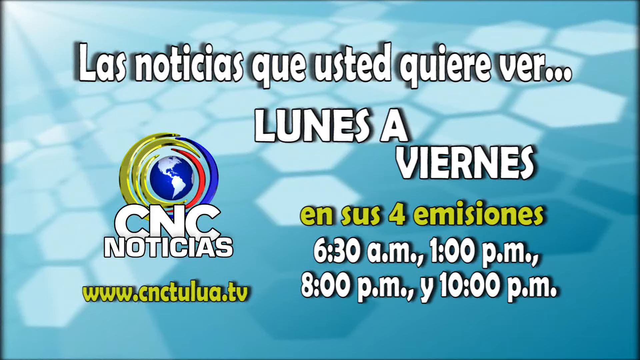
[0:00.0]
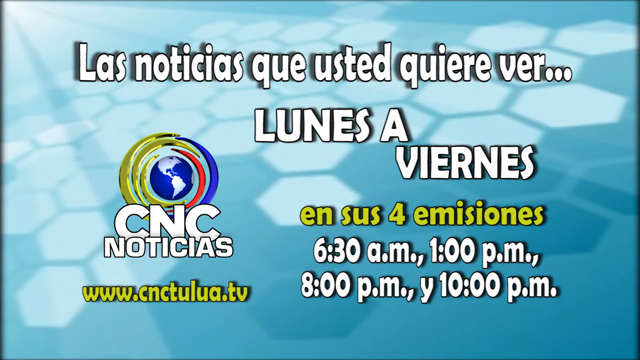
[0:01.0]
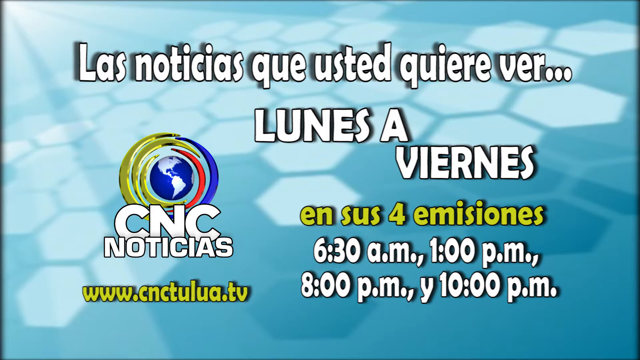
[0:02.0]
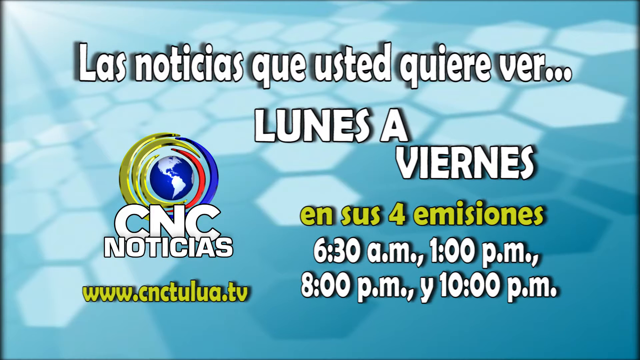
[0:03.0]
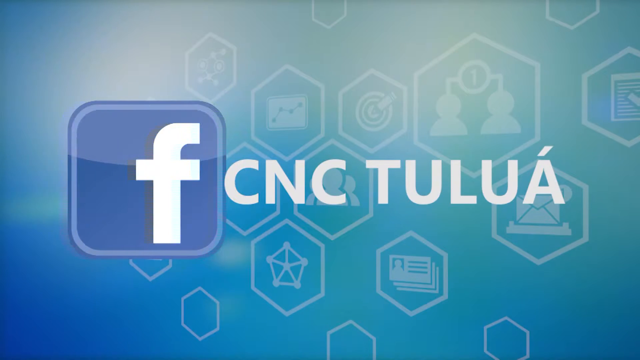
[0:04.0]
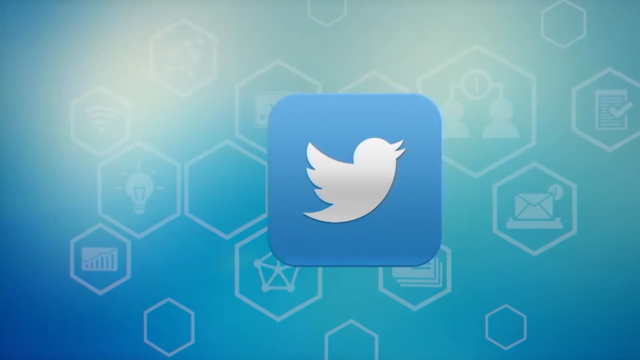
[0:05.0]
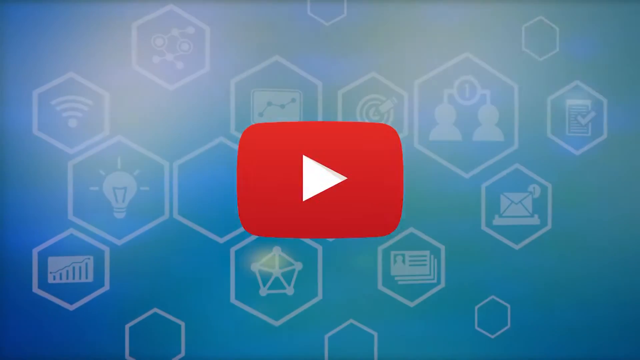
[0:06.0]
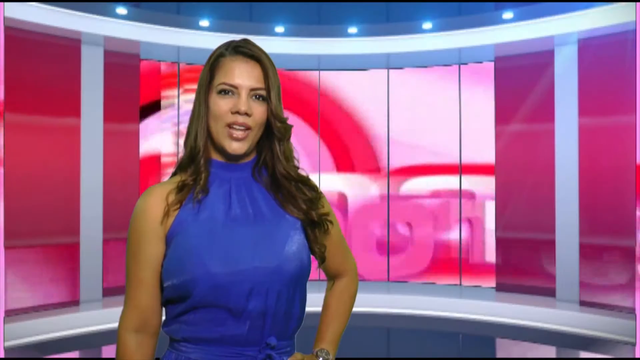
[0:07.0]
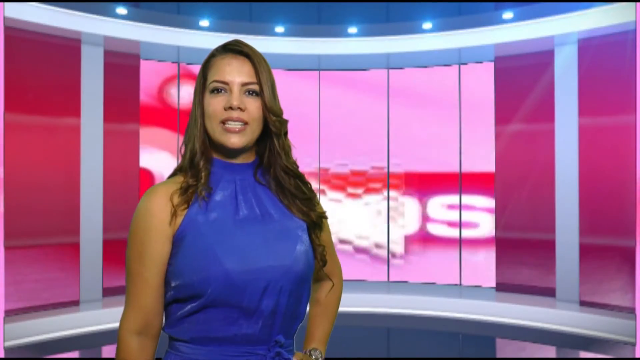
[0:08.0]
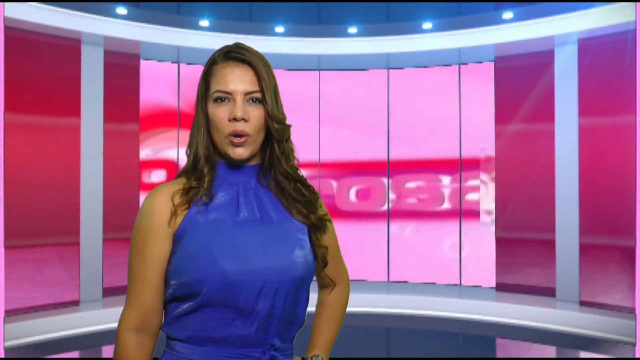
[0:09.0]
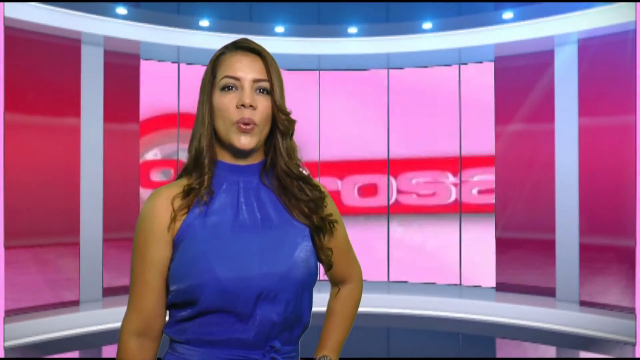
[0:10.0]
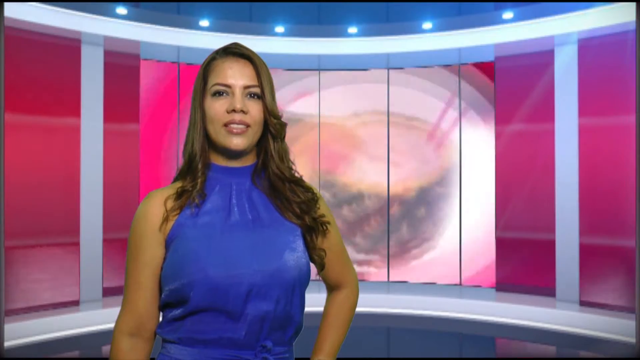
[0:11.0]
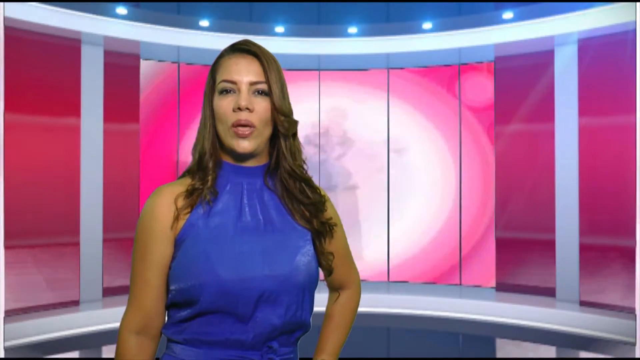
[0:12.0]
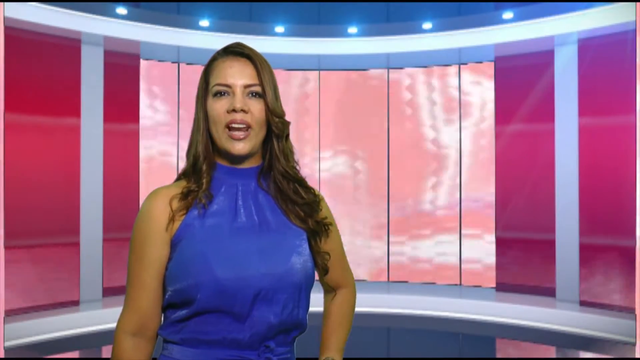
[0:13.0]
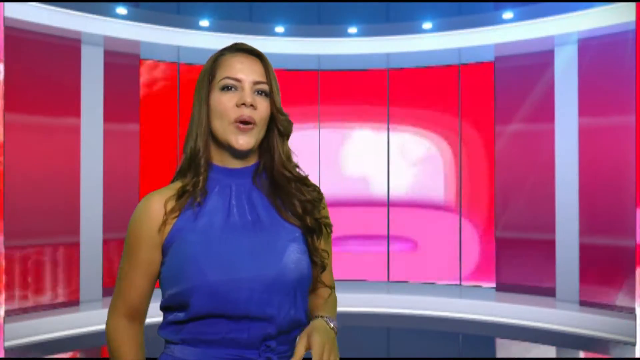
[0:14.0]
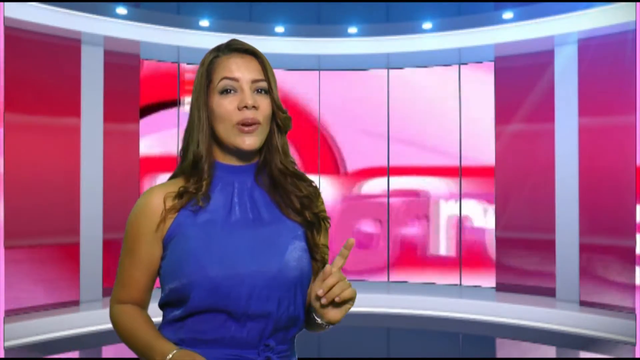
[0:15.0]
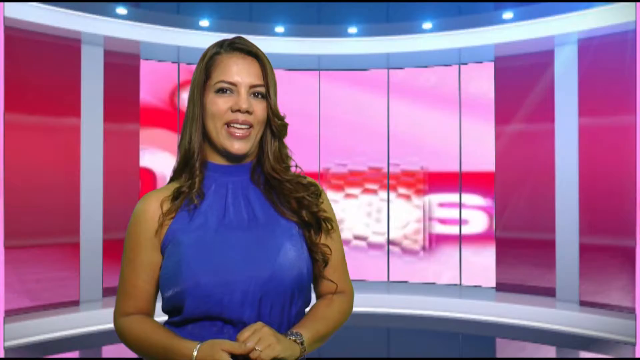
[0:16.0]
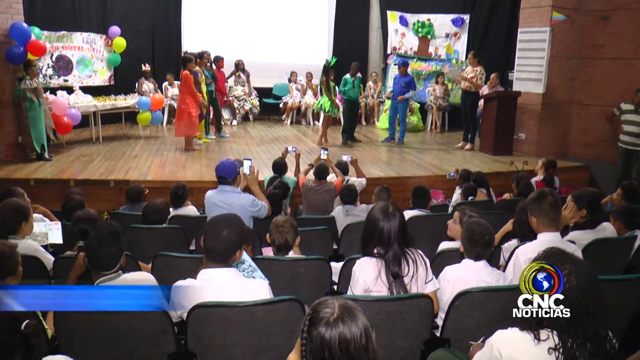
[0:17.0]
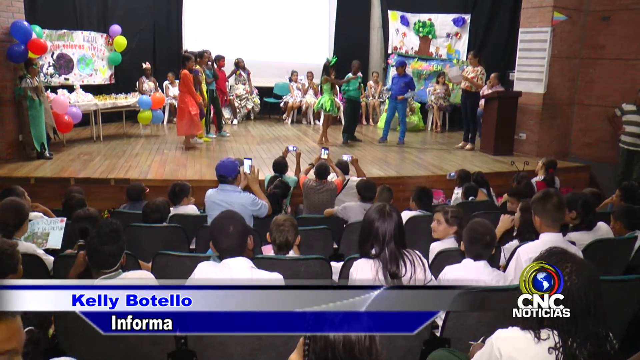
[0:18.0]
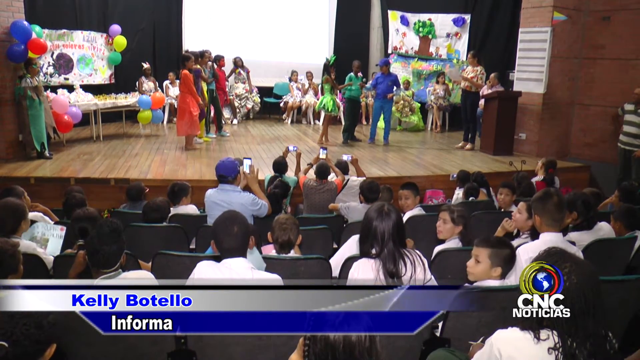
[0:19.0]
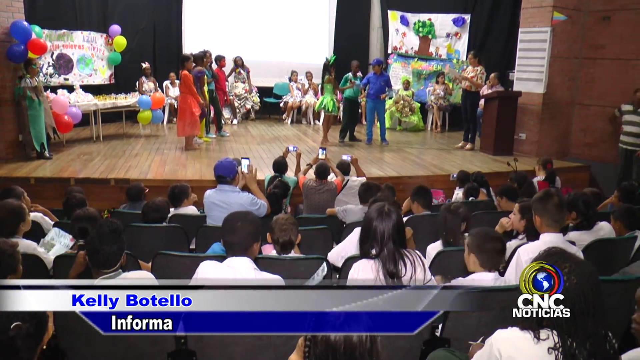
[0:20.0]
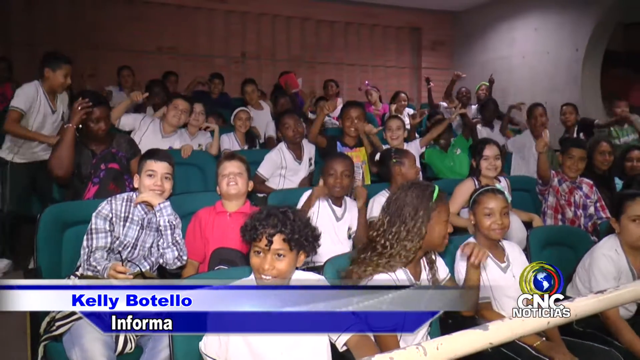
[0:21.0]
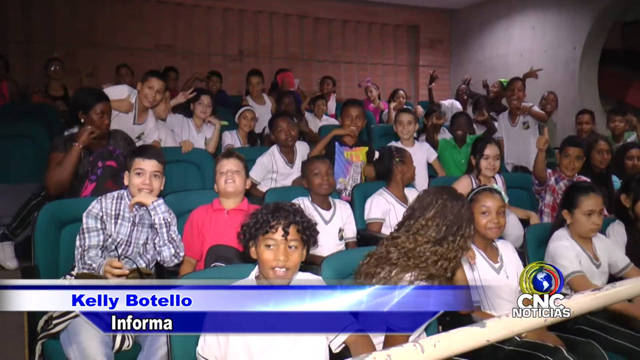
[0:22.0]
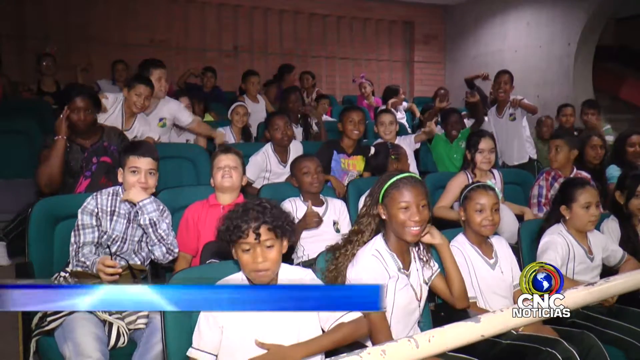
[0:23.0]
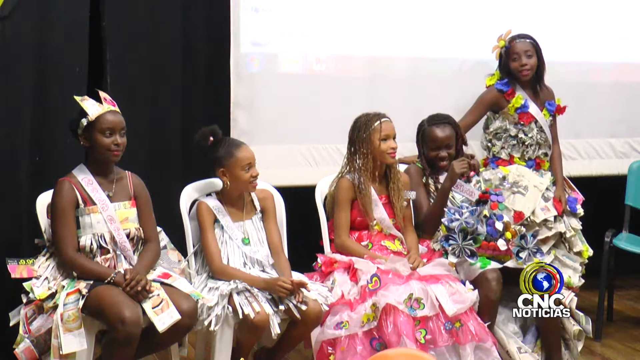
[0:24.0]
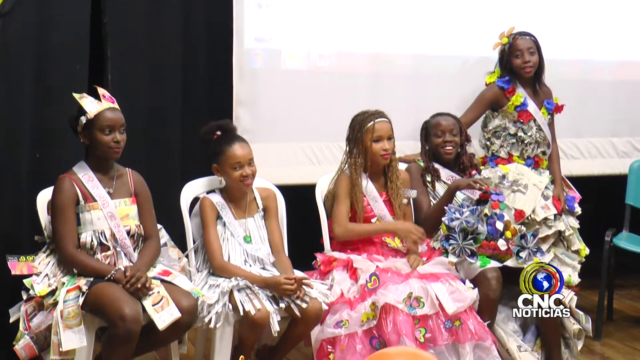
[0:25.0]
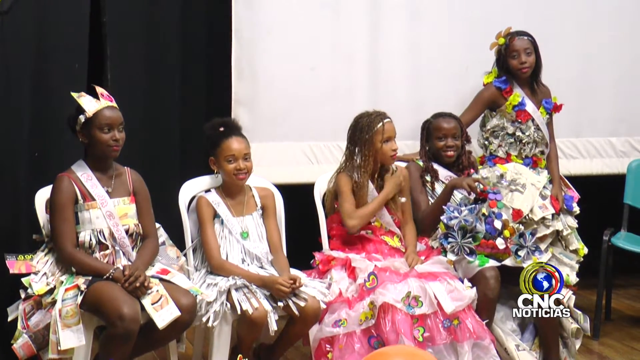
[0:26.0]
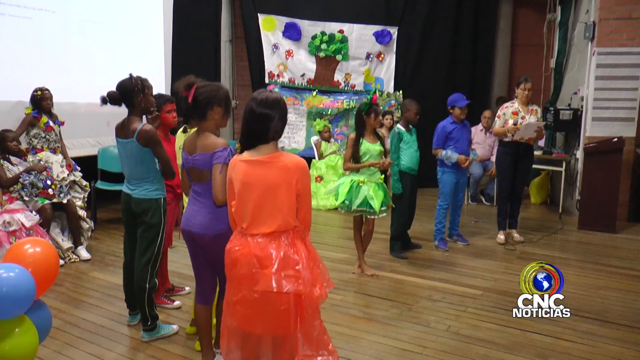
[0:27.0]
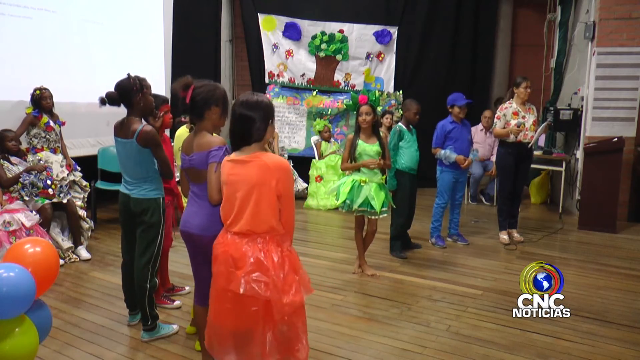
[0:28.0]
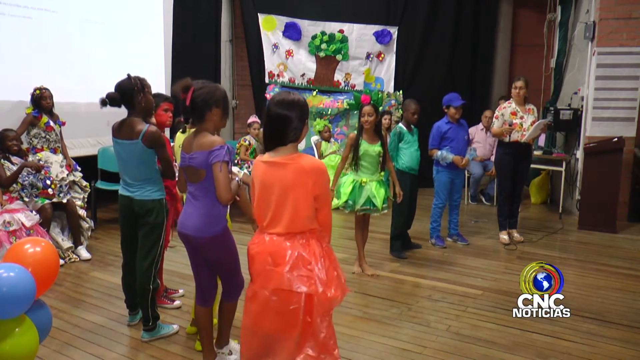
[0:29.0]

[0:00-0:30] A news program identified as CNC Noticias opens with the title "Las Noticias que usted quiere ver lunes a viernes" and the times 6:30 a.m., 1 p.m., 8 p.m. and 10 p.m. The footage shows a stage, apparently at a school, with many African American people present. African American girls who are students are dressed up for what appears to be a Spanish-influenced event, almost like a play but also sort of like a pageant.